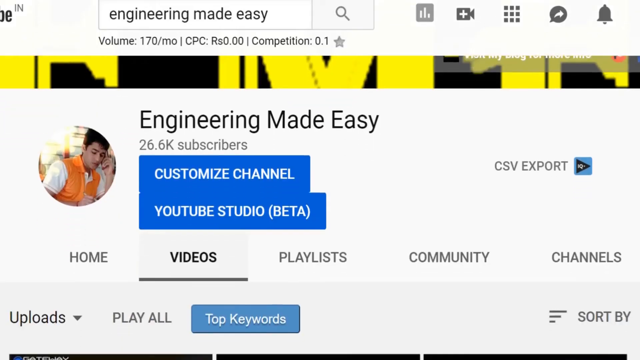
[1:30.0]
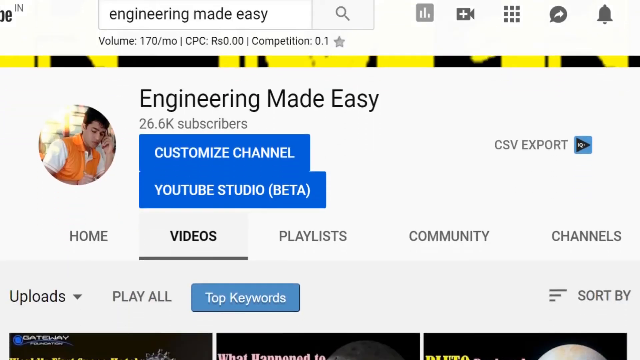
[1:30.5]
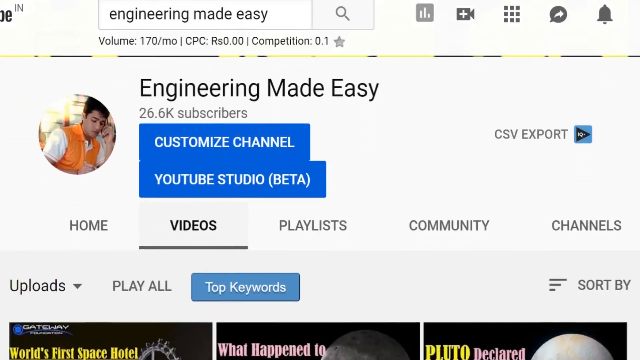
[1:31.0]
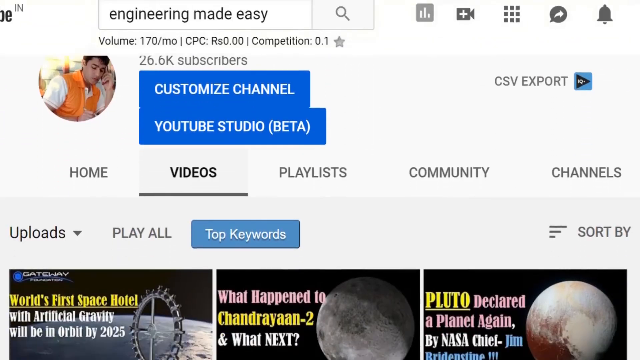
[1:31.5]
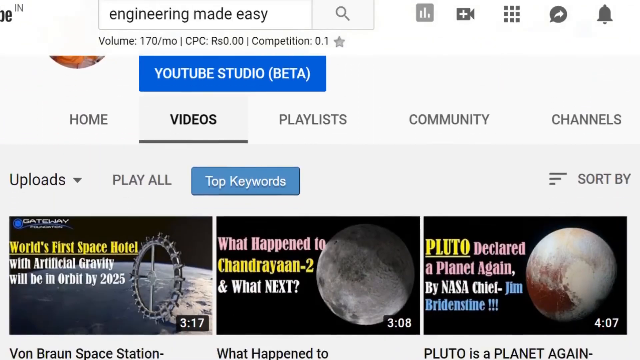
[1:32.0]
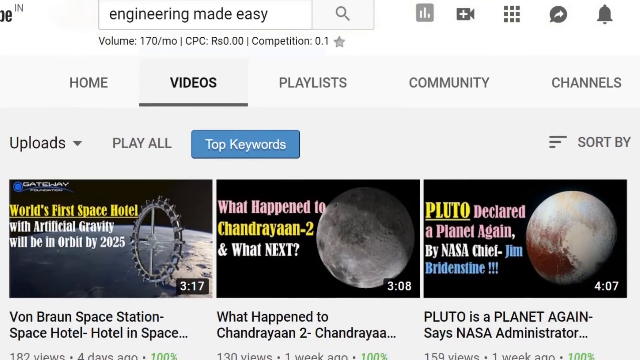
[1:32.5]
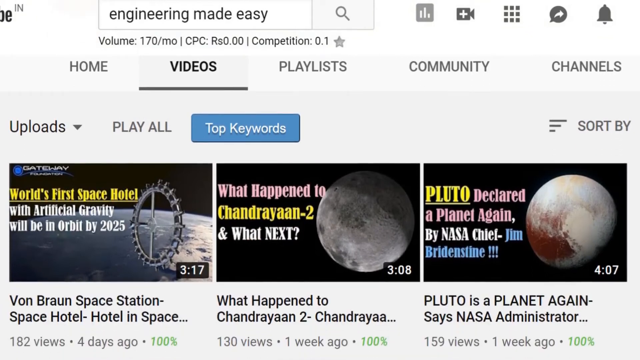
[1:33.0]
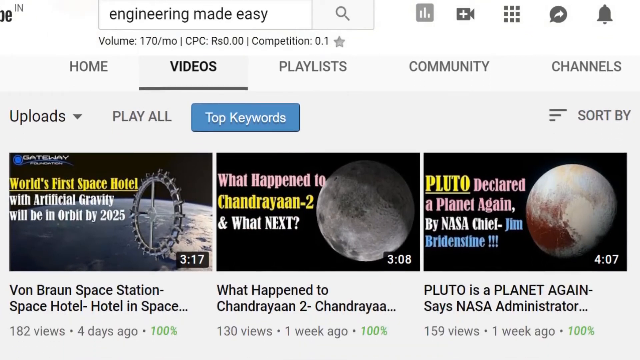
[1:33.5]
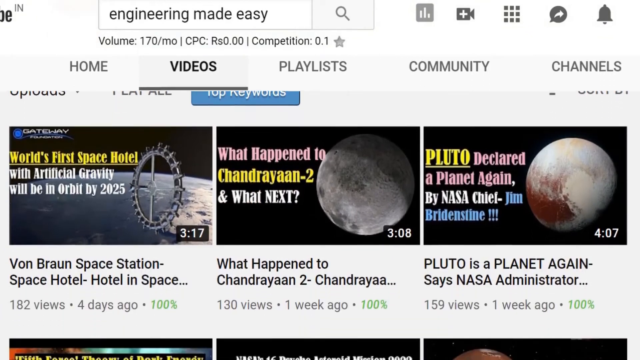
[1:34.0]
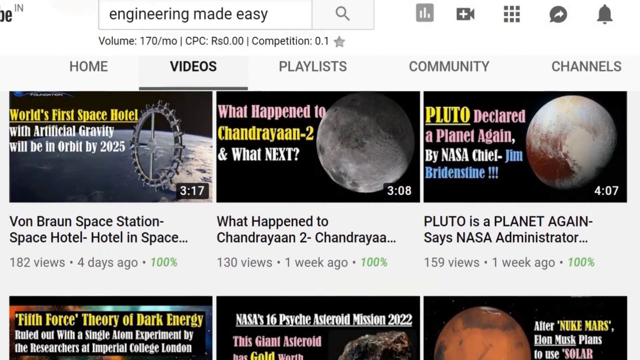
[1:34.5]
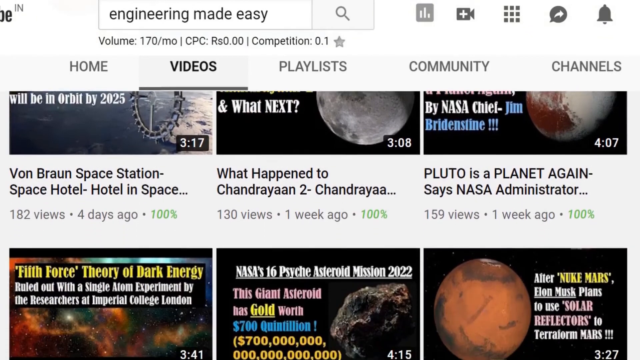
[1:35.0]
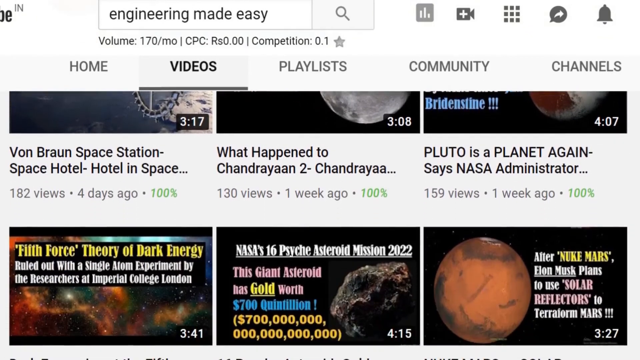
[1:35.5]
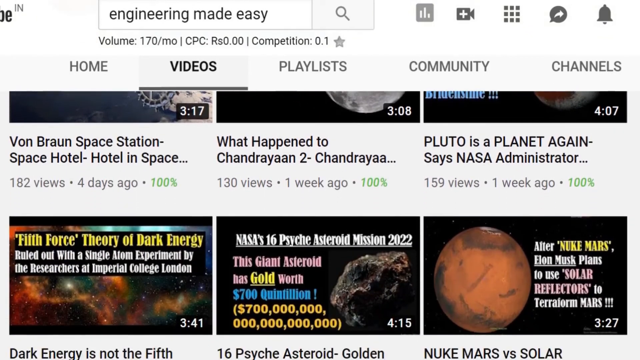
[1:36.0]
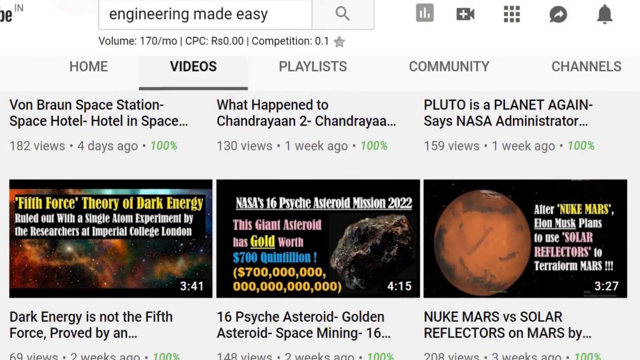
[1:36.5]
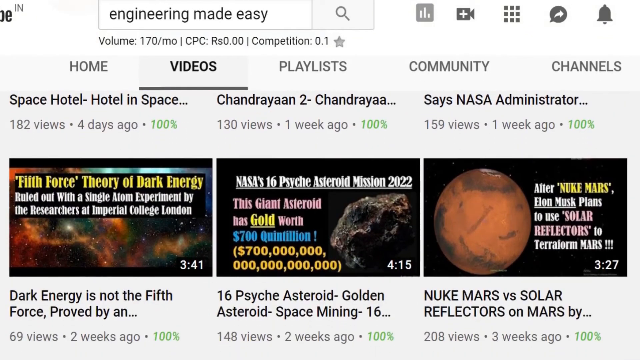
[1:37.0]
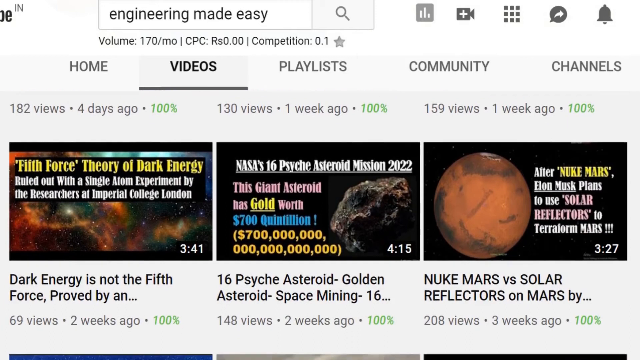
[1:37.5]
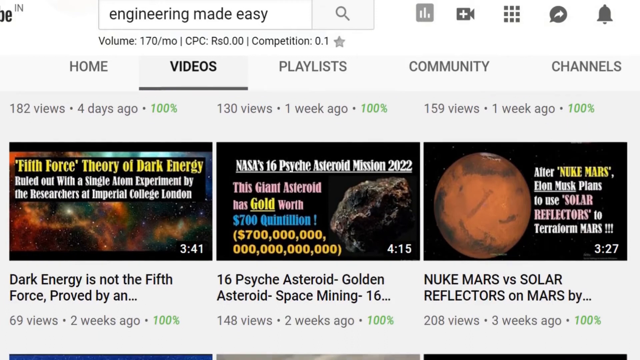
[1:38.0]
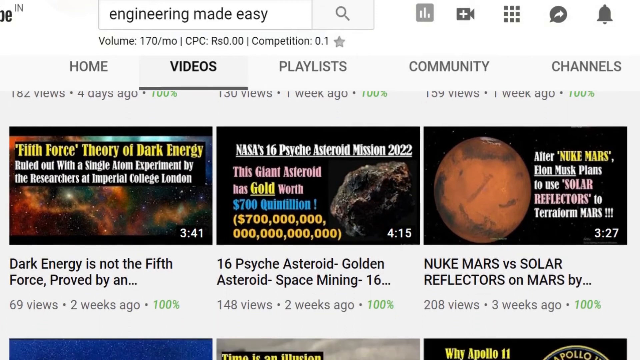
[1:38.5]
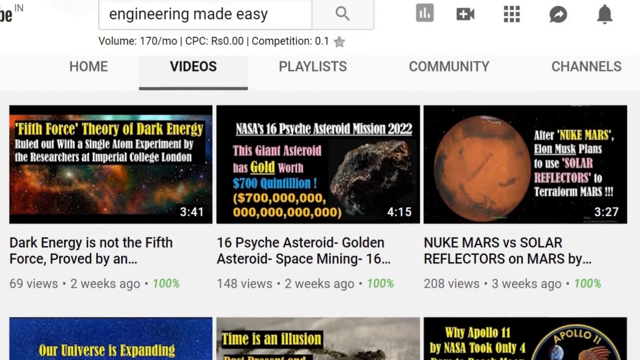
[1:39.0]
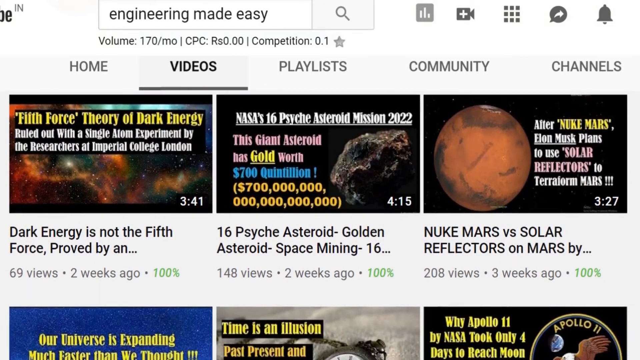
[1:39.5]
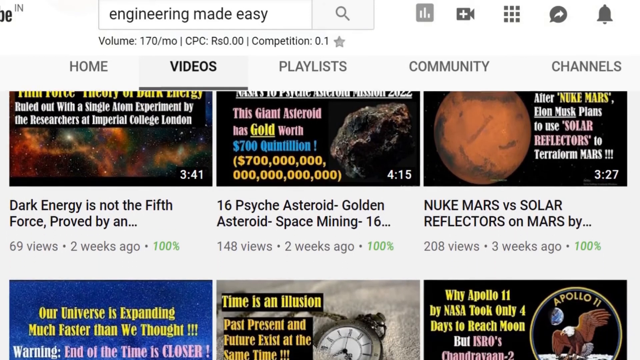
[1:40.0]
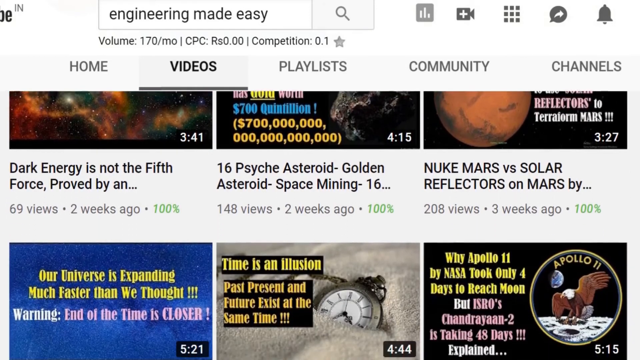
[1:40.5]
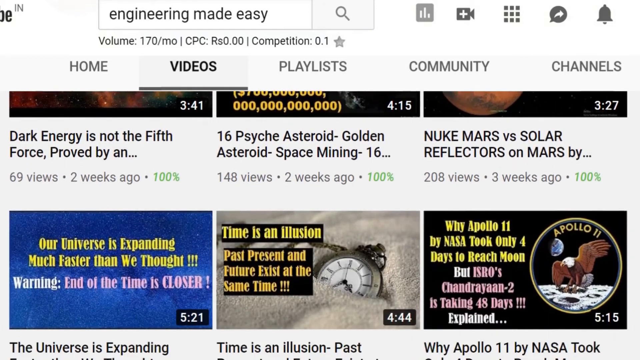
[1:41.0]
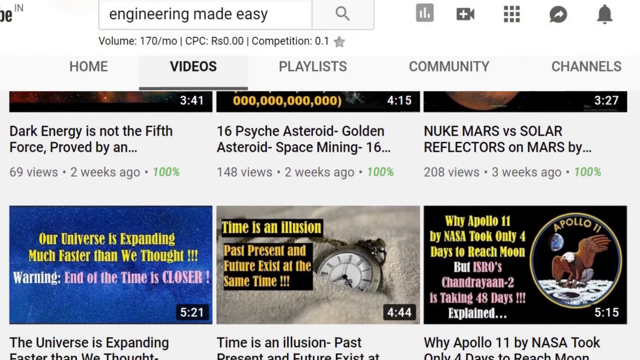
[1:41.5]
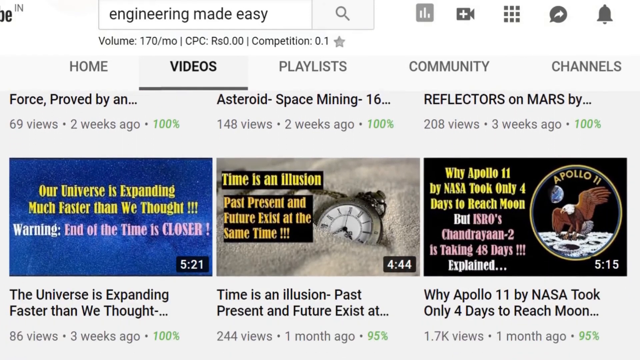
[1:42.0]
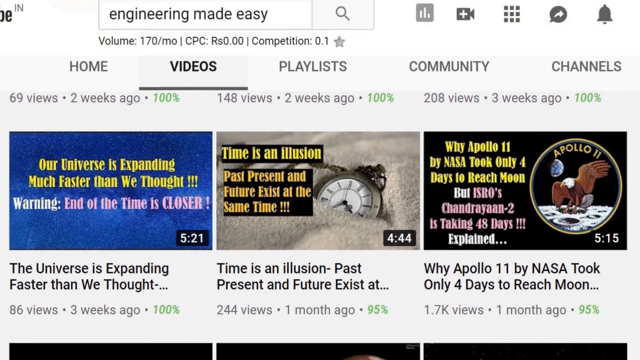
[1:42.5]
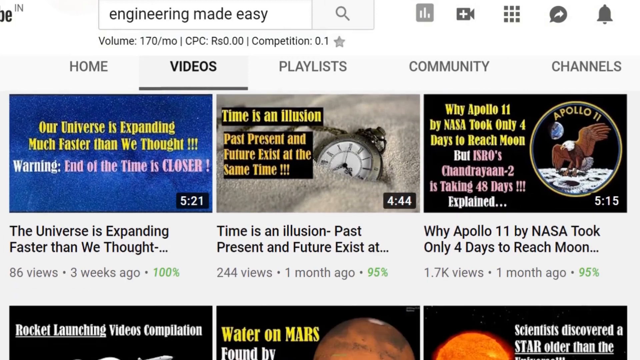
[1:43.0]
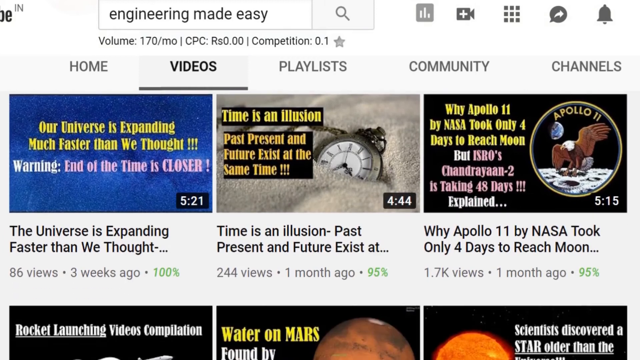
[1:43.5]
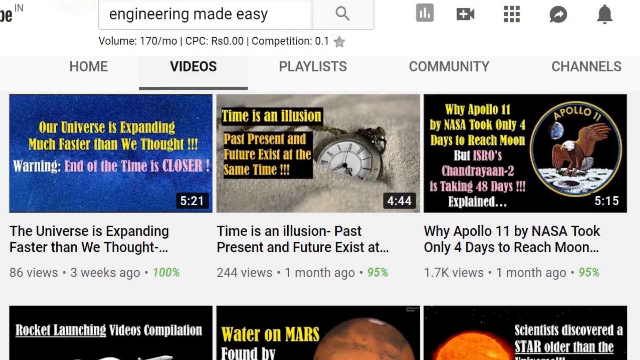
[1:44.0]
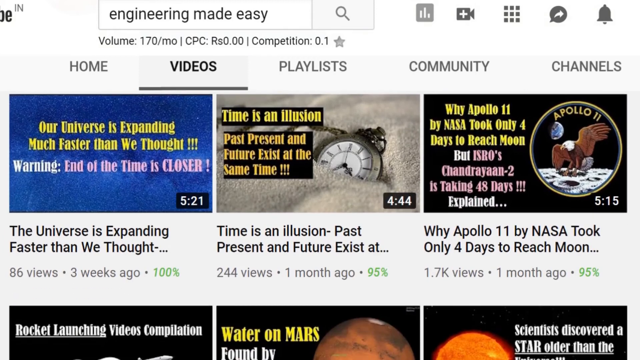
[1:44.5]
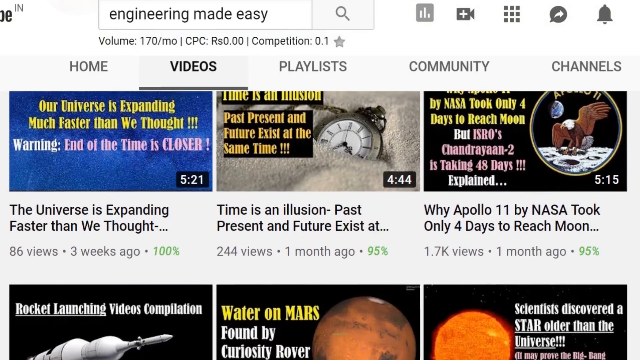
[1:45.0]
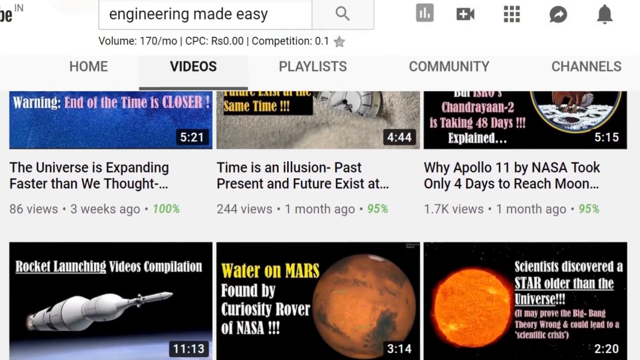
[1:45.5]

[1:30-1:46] A page appears that looks like someone's page, with a search bar reading "engineering made easy" and a search icon next to it, and "volume 170" written. Then something that looks like someone's profile is shown, with different videos scrolling past, with various titles all related to science and space. The page is named "engineering made easy" and has 26,600 subscribers, and text highlighted in blue includes "customized channel." The profile picture shows a white male wearing a white t-shirt with an orange on the front; he appears to have black hair and is looking down. As the view moves down, the uploads are shown: the latest upload lasts 3 minutes 17 seconds, and the second has 182 views and was uploaded 4 days ago.